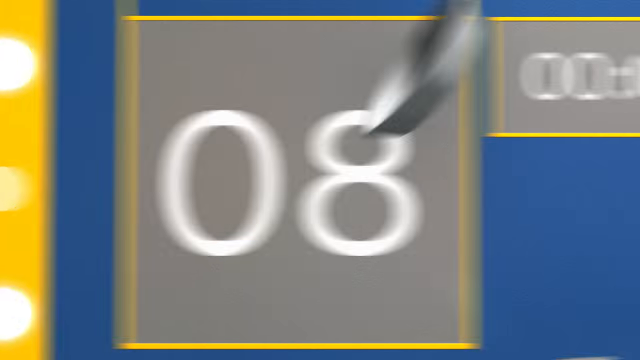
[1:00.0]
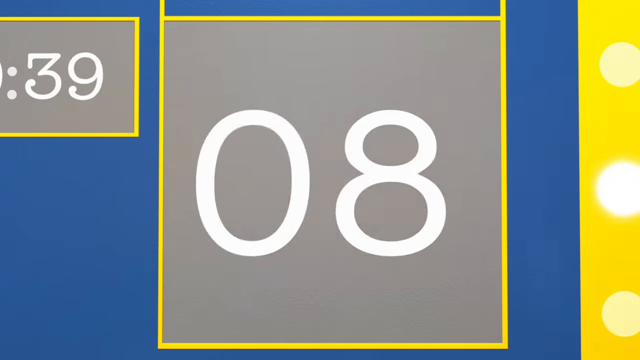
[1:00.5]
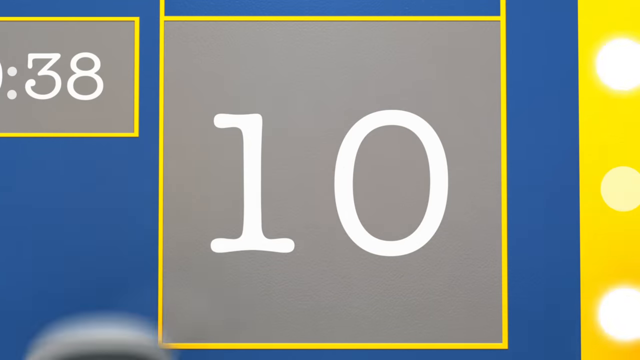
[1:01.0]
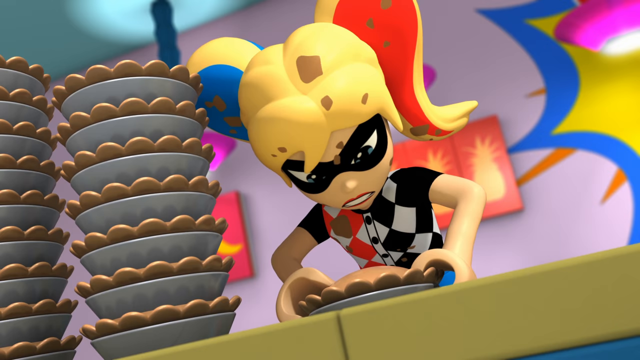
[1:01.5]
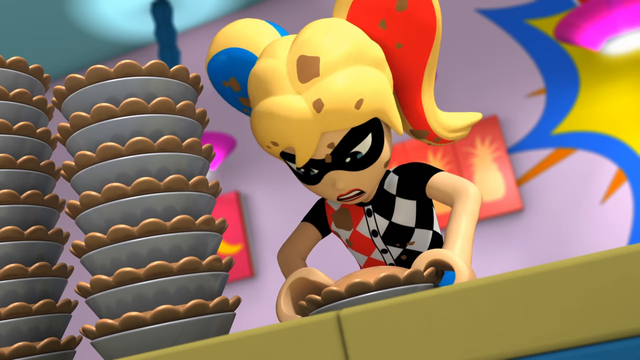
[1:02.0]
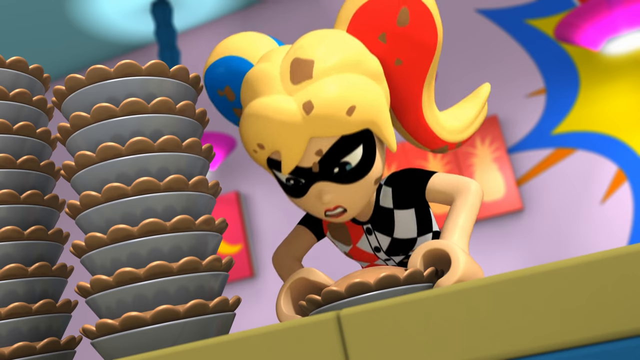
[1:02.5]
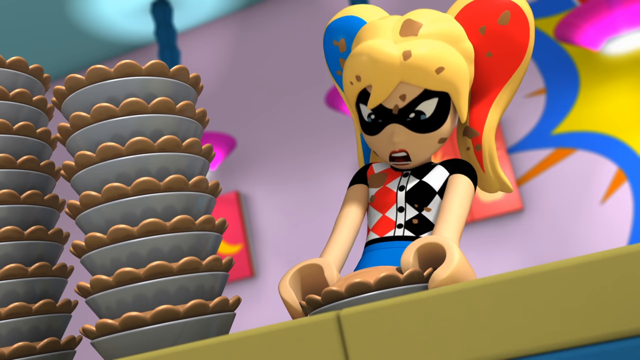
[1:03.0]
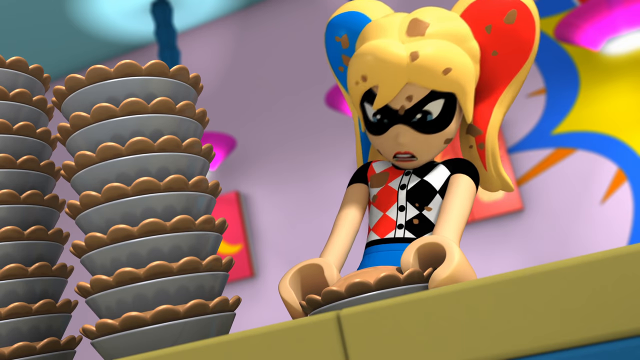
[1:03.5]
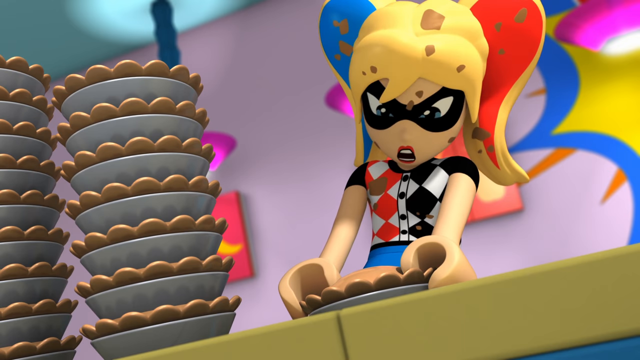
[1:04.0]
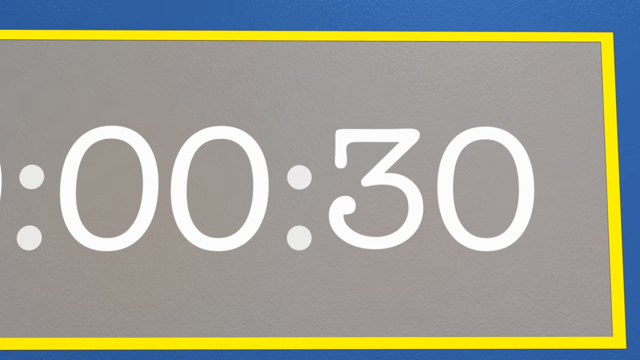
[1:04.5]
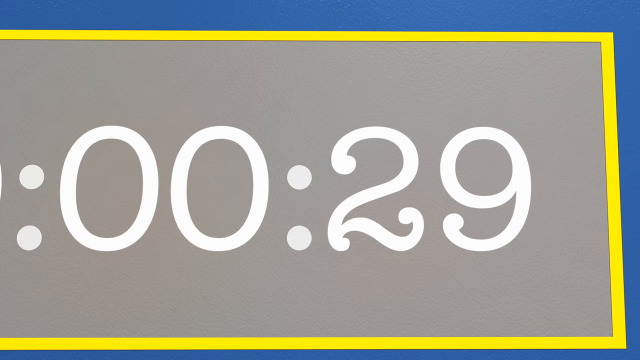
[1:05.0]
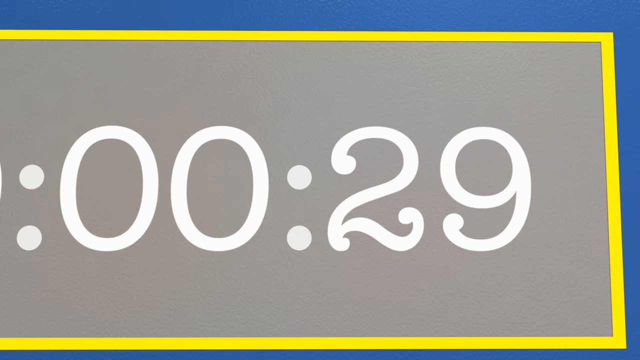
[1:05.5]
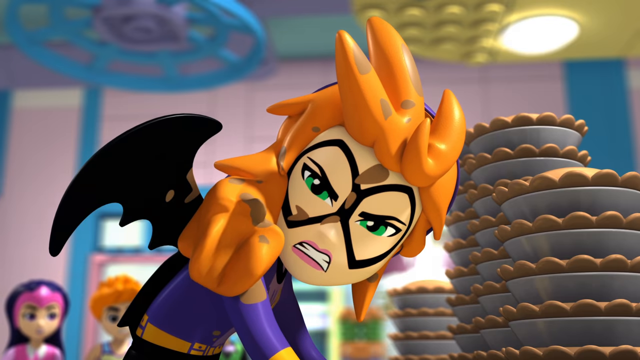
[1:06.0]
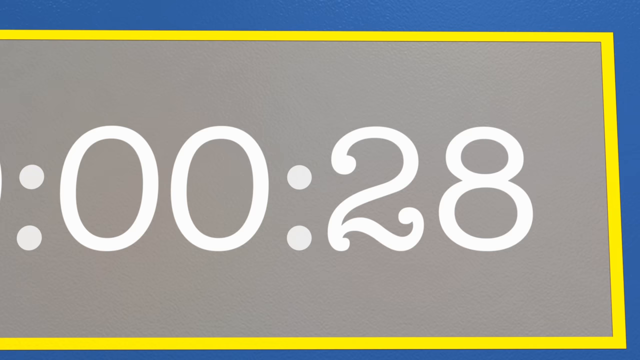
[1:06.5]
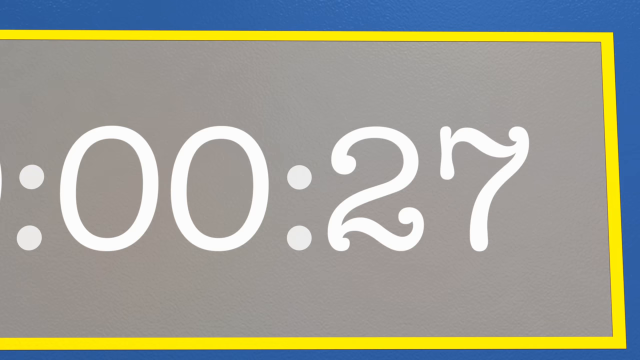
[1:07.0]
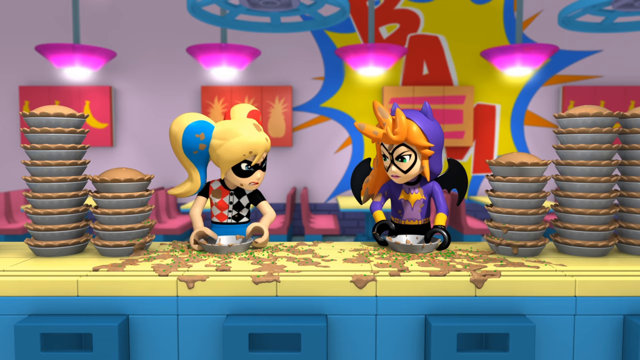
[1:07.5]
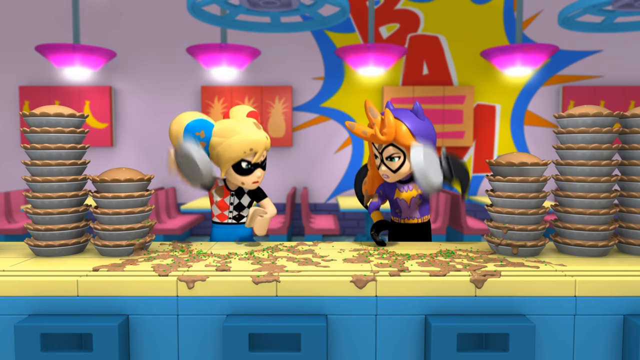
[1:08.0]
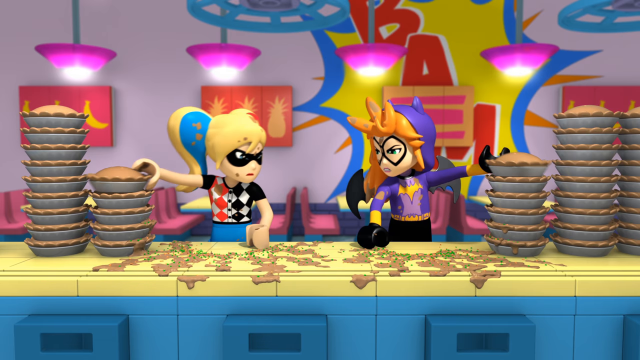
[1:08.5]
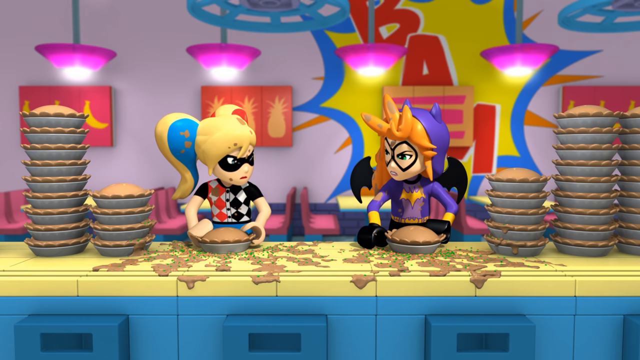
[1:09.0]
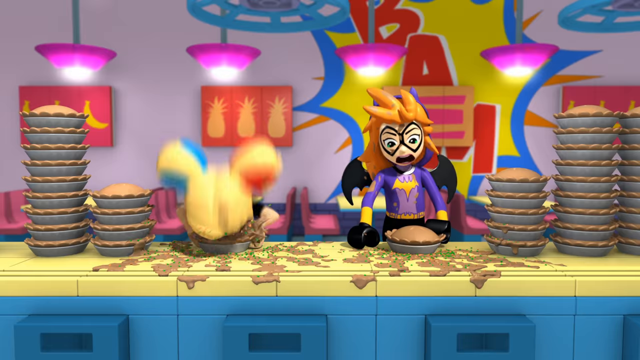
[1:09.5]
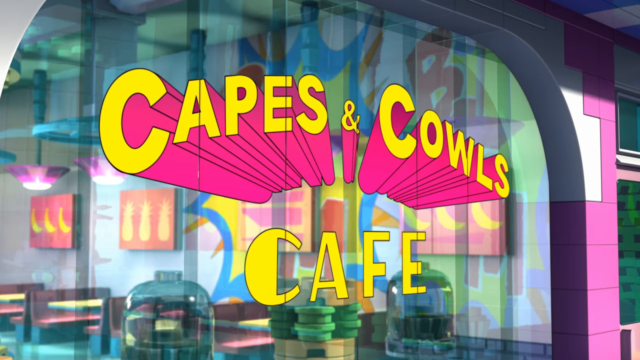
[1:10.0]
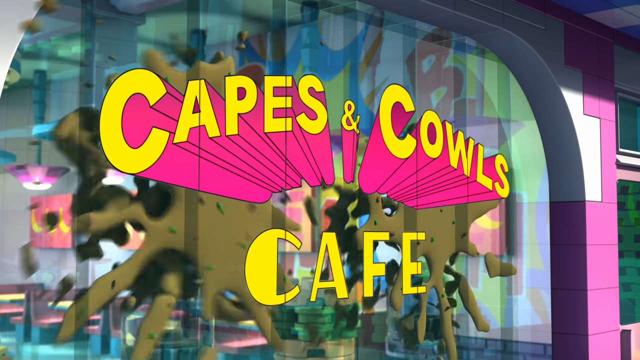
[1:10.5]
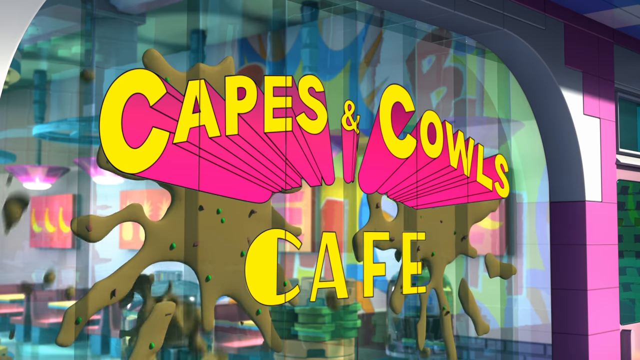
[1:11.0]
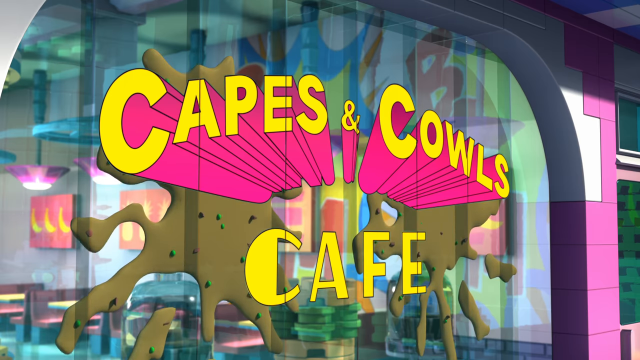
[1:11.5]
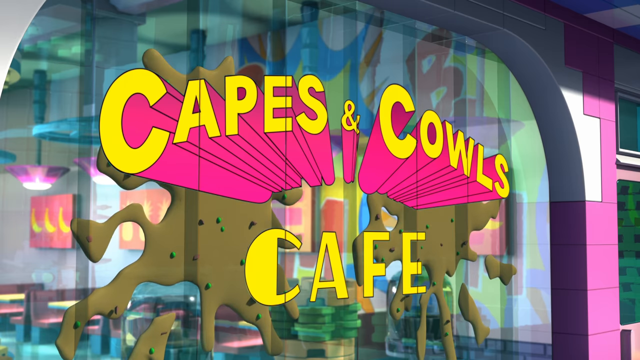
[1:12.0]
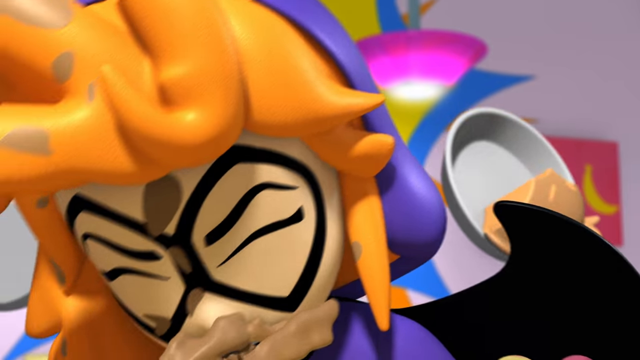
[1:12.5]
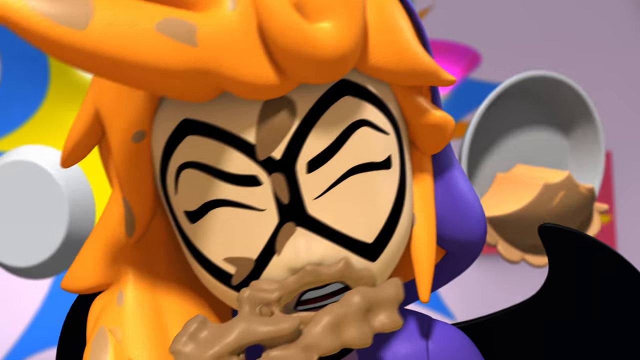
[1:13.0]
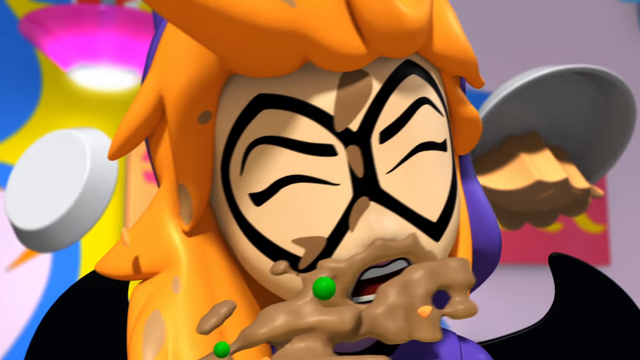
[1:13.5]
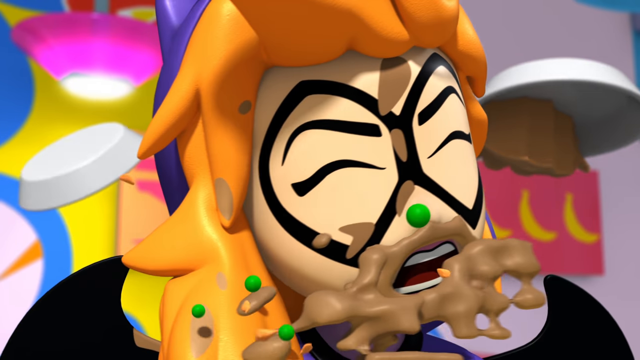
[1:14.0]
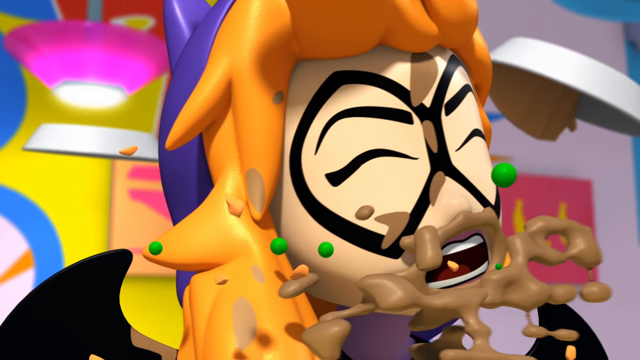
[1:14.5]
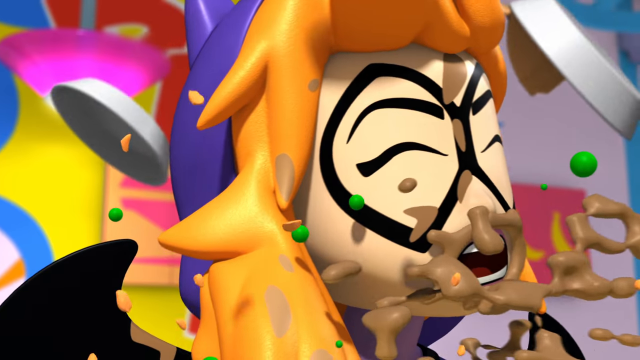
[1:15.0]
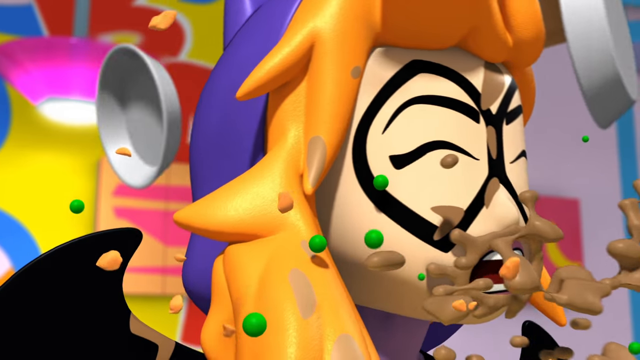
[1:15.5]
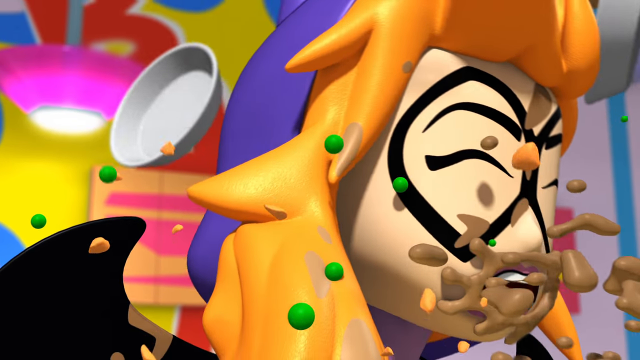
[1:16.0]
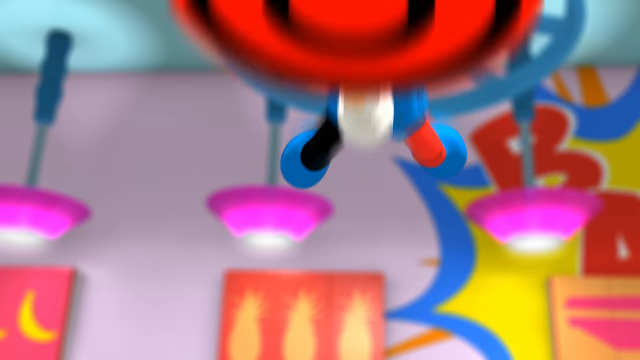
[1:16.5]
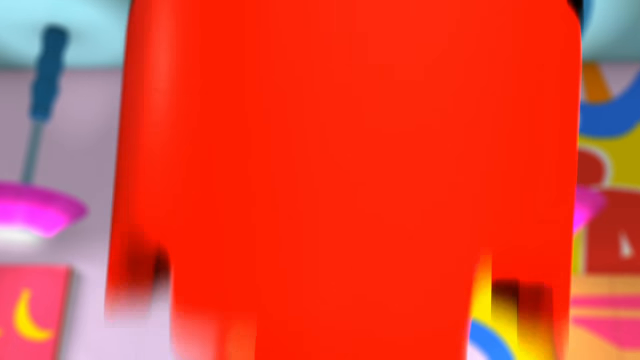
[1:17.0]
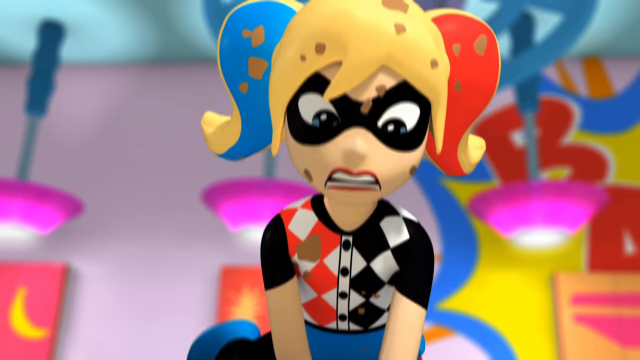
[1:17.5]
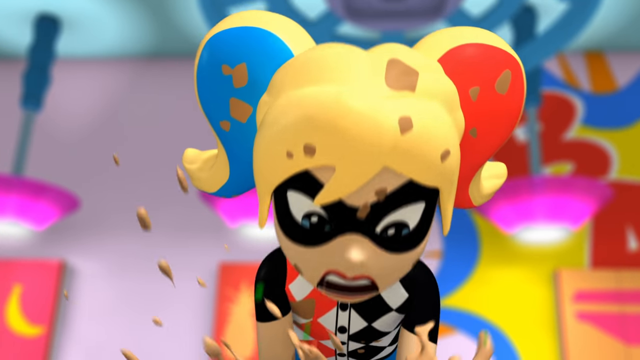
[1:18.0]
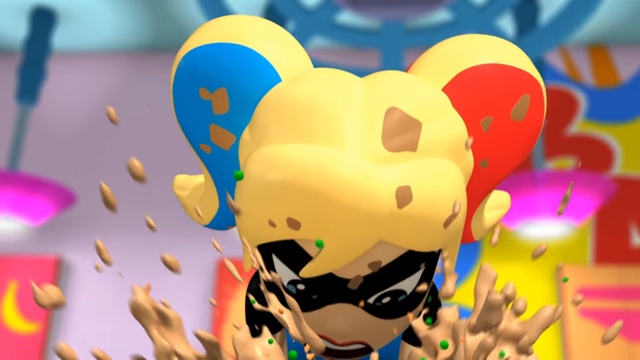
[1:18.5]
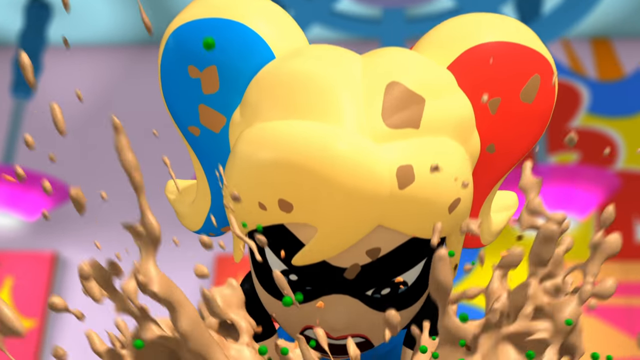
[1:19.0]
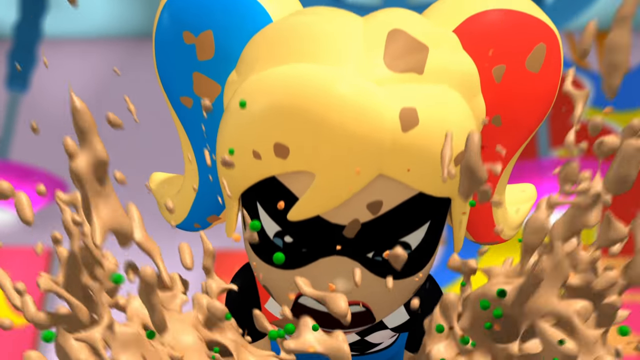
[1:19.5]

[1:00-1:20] A scoreboard shows white numbers on a gray background; the scoreboard itself is mostly blue and yellow, with lights on its border. The numbers climb higher and higher. The view then shows the faces of the competitors, Harley Quinn and Batgirl, both getting messy with pie all over them, while the time counts down to less than 30 seconds. A sign with the cafe's name reads "Capes and COWLS Cafe", and pie is smeared on the sign and the window. Then, in slow motion, Harley Quinn and Batgirl are smashing pie.